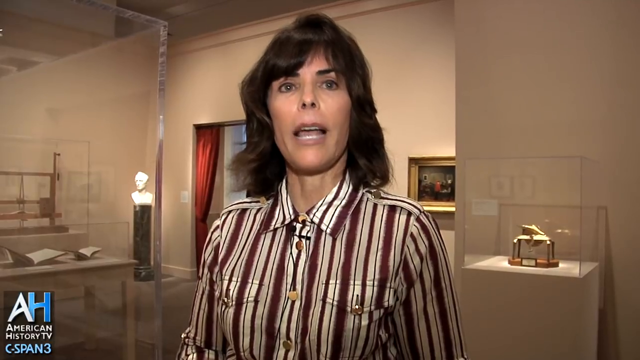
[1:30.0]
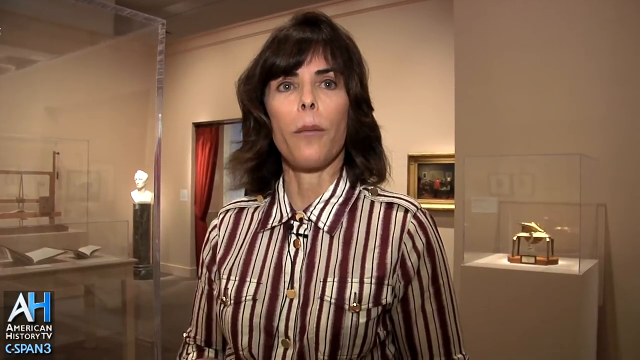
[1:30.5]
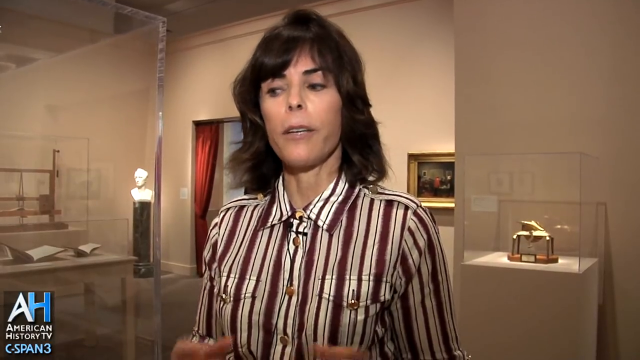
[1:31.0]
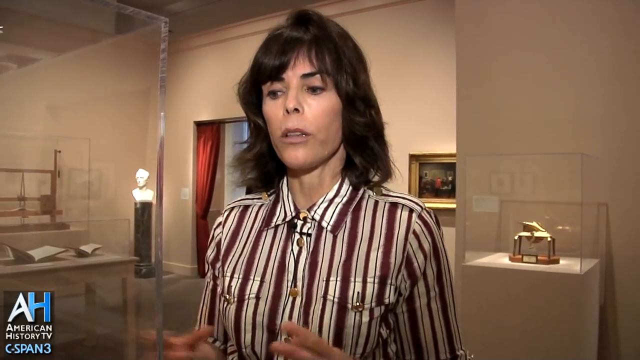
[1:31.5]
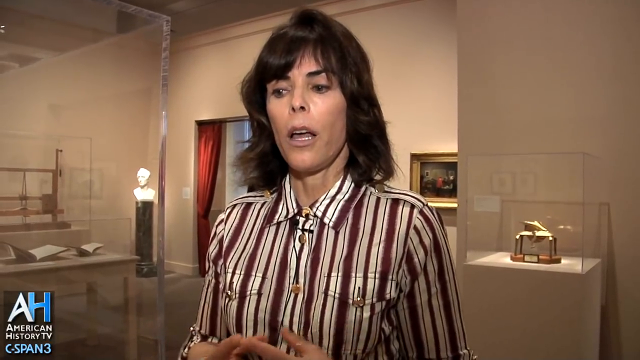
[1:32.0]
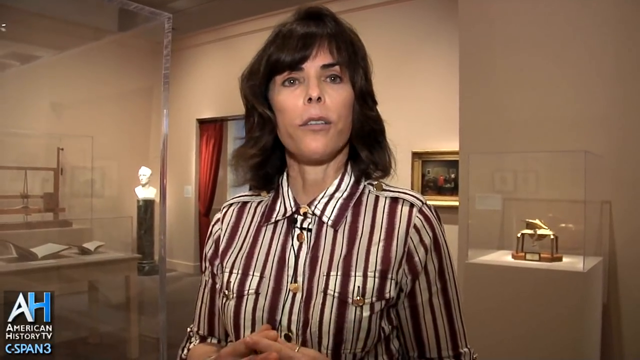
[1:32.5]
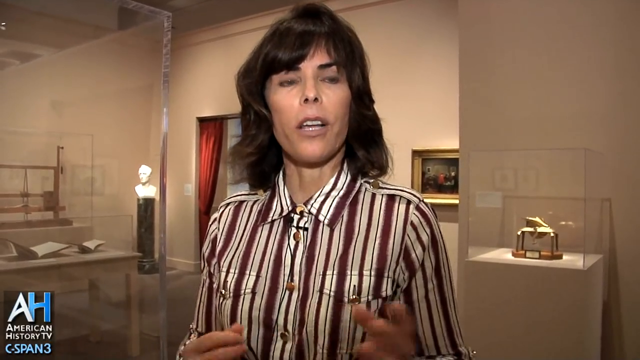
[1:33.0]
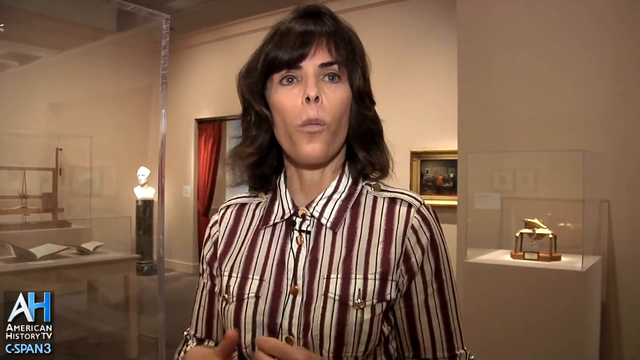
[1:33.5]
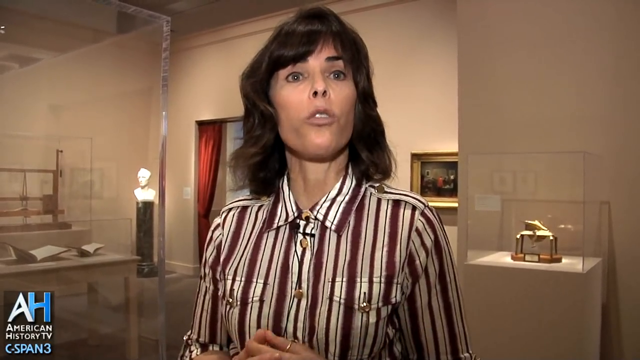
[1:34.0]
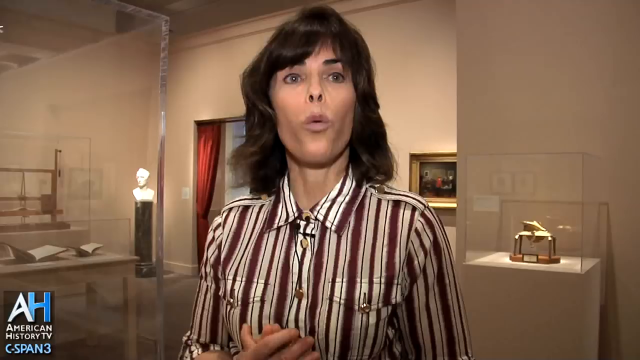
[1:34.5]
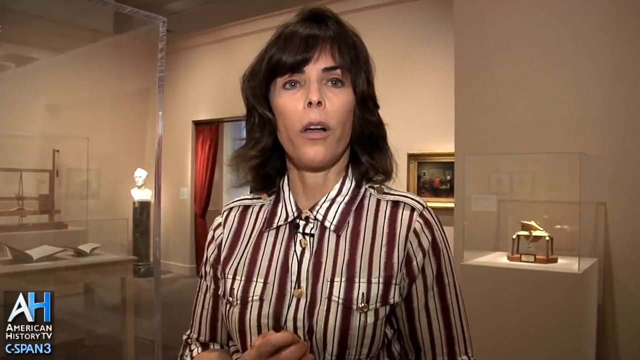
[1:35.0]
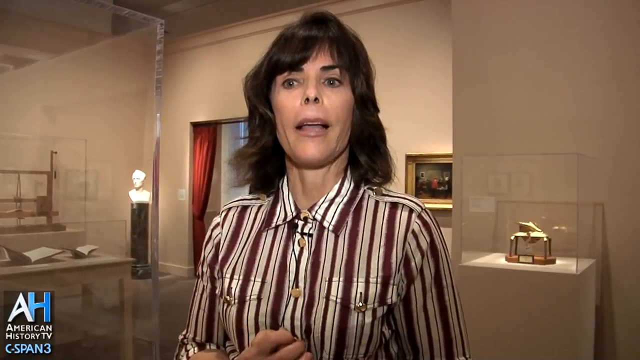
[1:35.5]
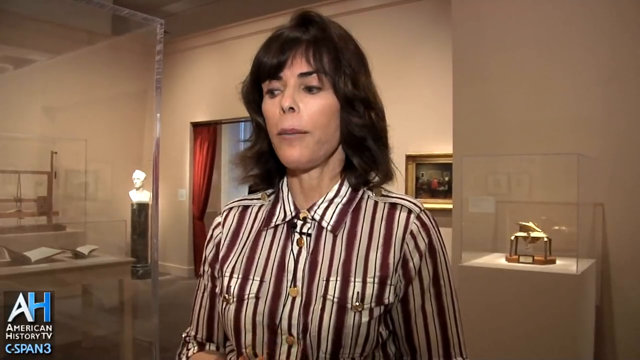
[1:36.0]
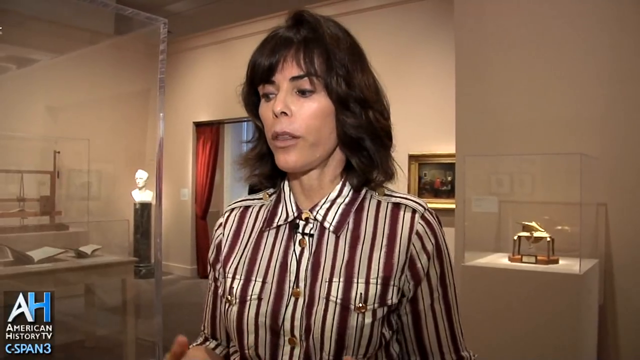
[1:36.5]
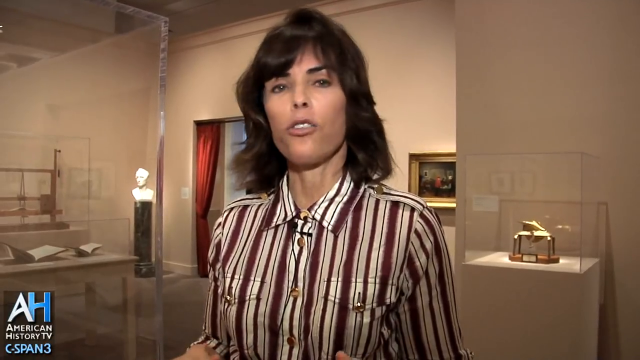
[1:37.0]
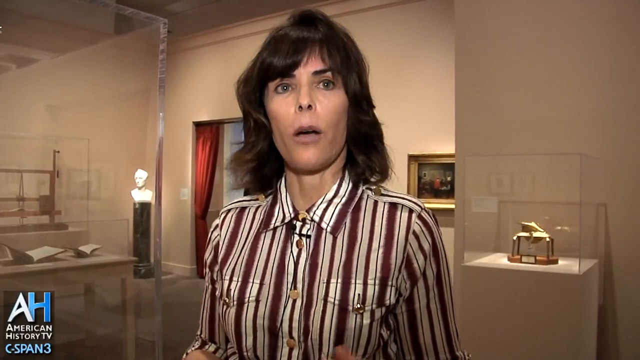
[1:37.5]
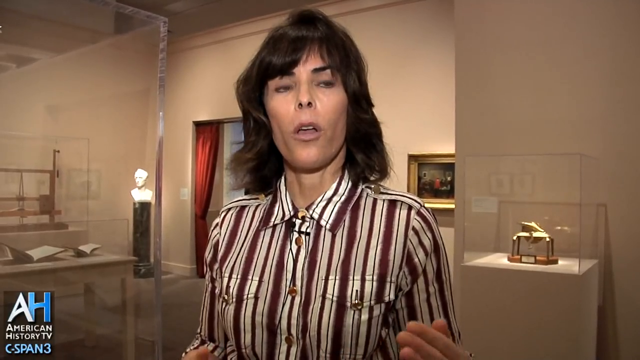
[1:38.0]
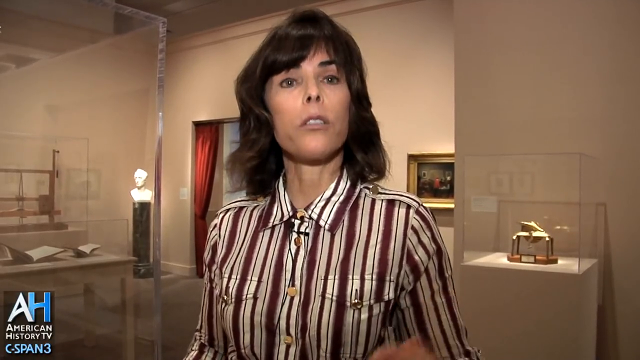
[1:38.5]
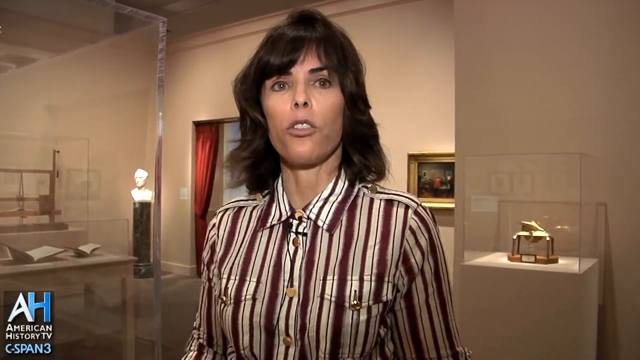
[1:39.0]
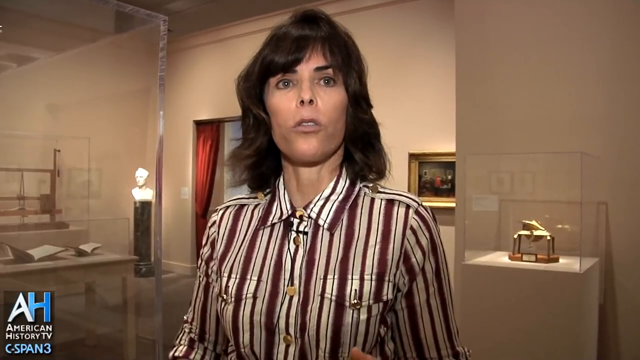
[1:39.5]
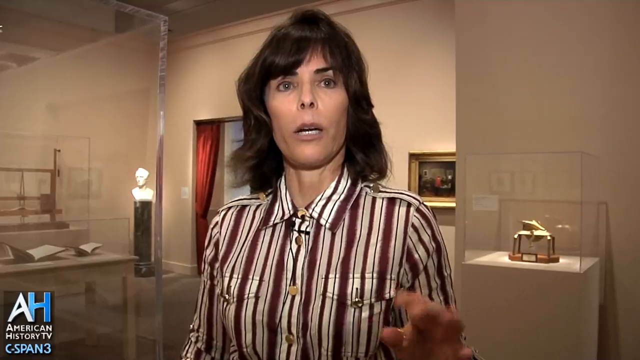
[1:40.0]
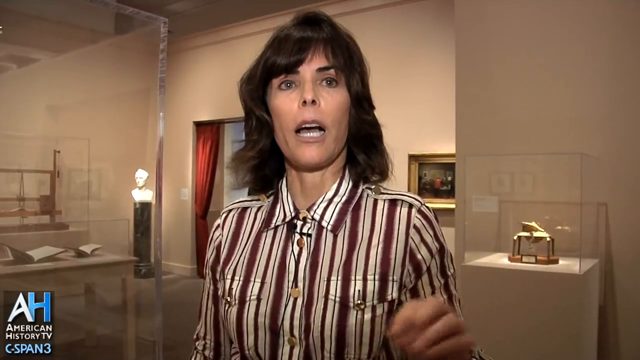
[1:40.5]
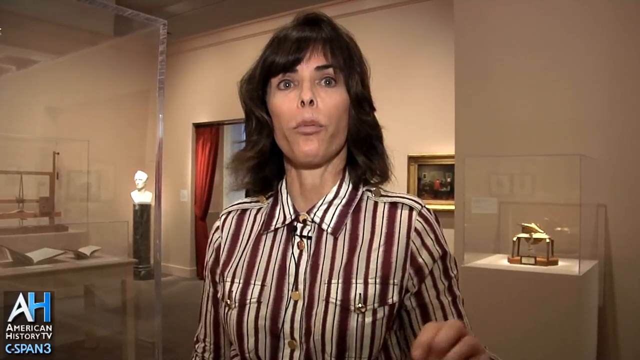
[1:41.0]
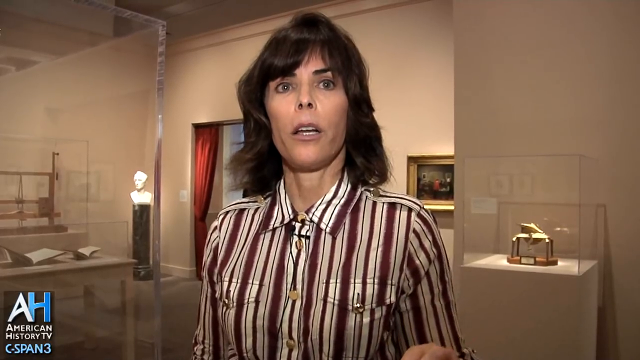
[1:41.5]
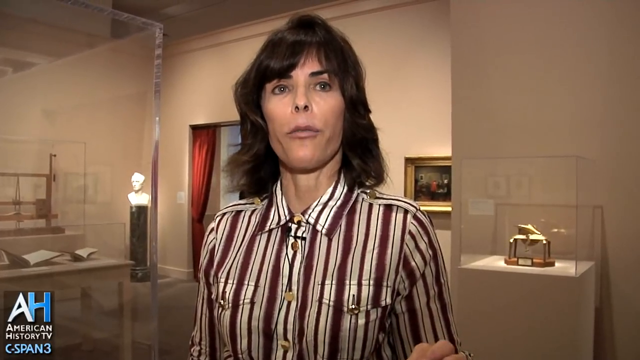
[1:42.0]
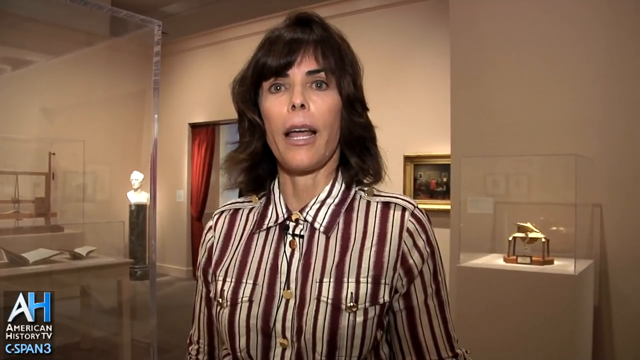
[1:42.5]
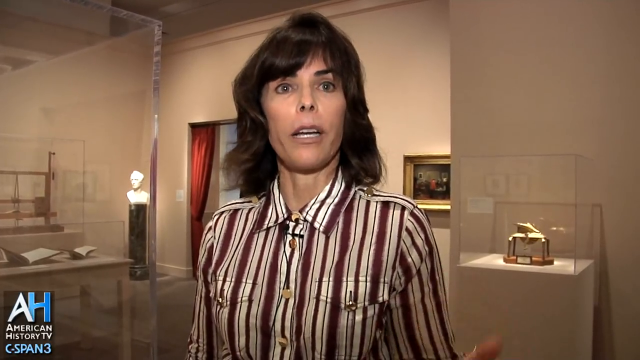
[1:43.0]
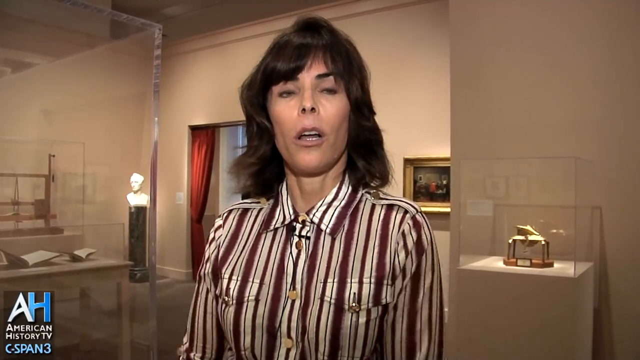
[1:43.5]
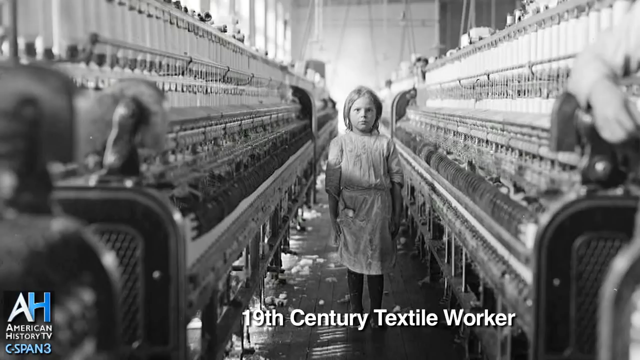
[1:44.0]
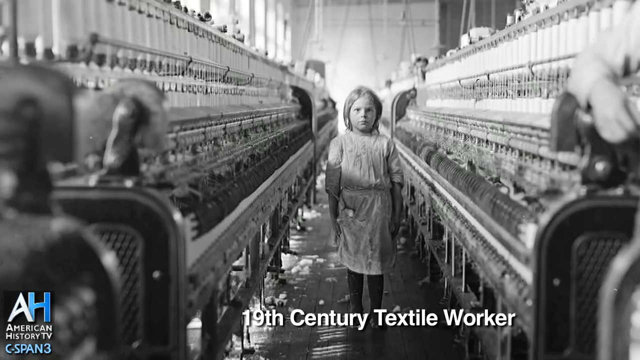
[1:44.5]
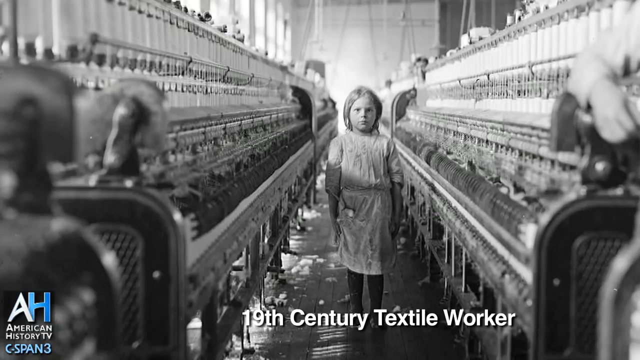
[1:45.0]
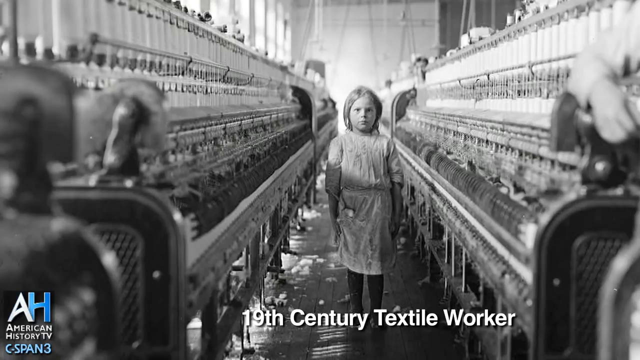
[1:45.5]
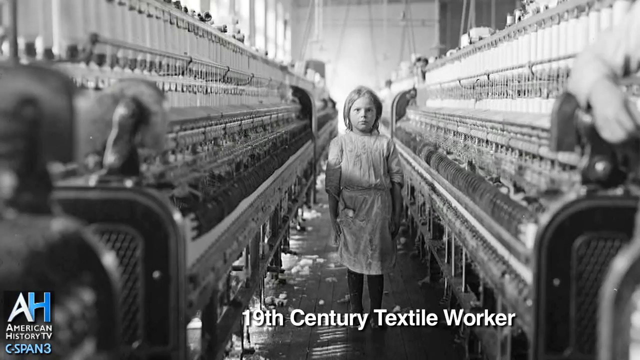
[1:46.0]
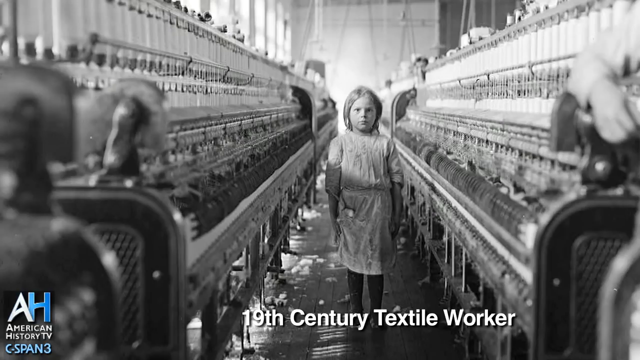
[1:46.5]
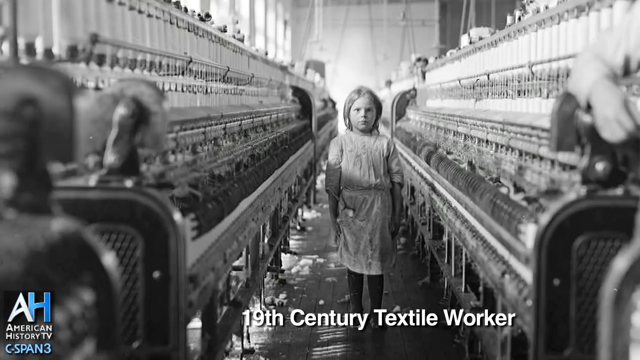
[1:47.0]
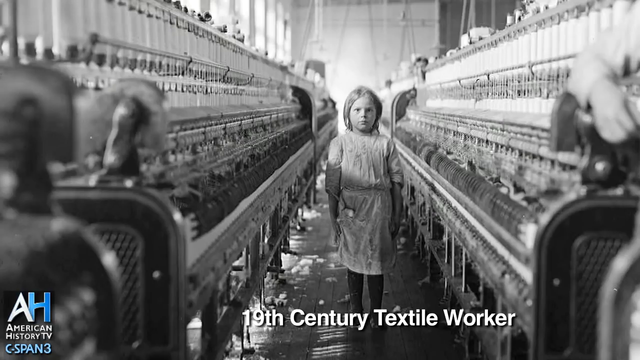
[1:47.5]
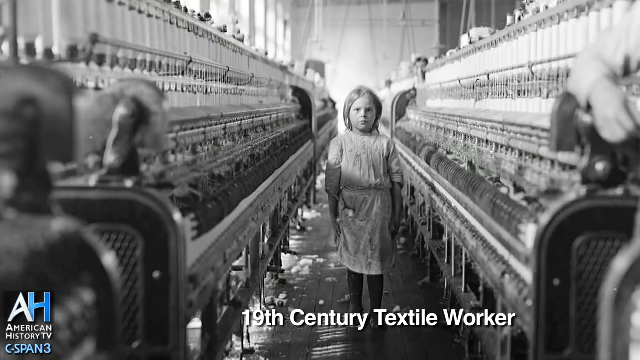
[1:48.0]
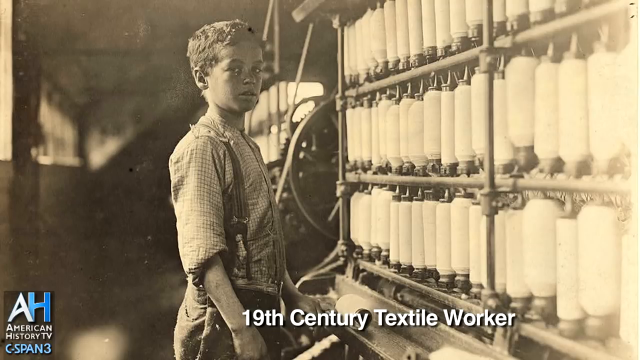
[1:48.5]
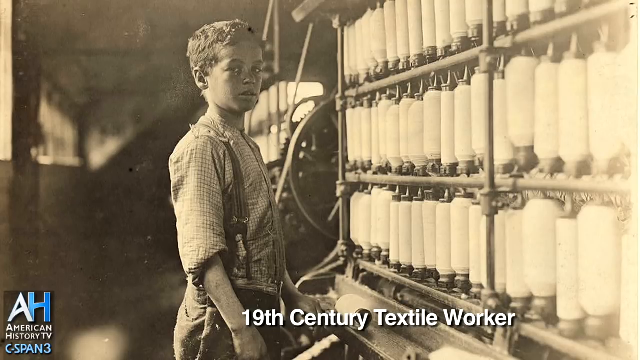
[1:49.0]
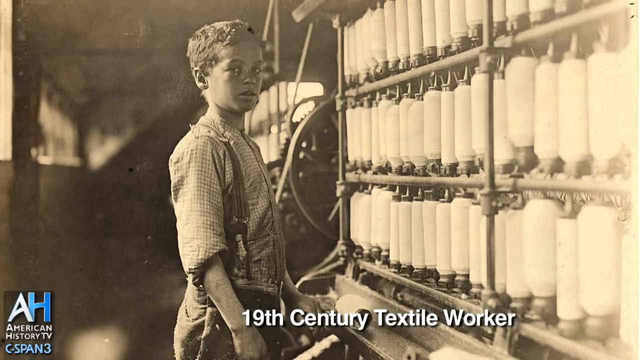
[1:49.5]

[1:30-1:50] The C-SPAN American history video is shot inside the Smithsonian Museum. A woman with a layered brown haircut wears a silk button-down blouse with vertical off-white and maroon stripes, epaulettes and button-down pockets. Different types of inventions are behind her in glass cases, and as she describes something she uses her hands, which pop into the frame. A 19th century textile worker is shown: a very young girl, maybe seven years old, standing between two looms, walking or standing. Then a little boy is shown next to rows of large bobbins, probably full of cotton to be woven into some type of textile.